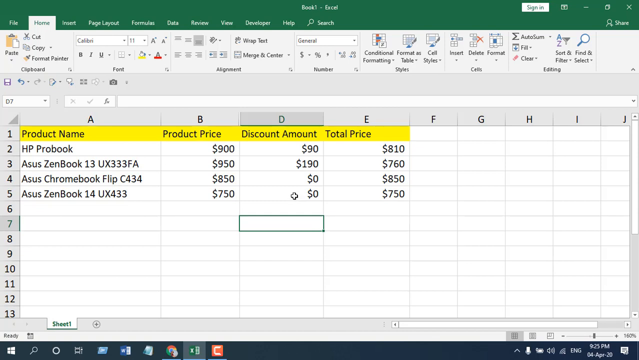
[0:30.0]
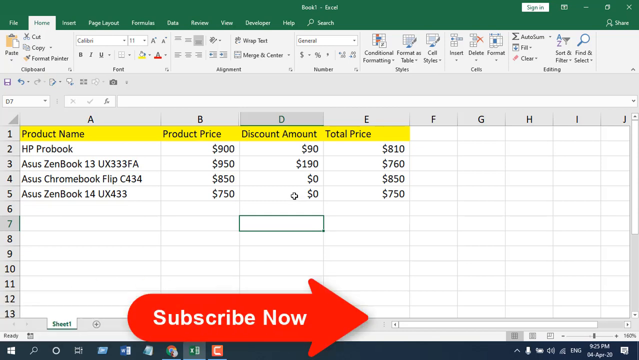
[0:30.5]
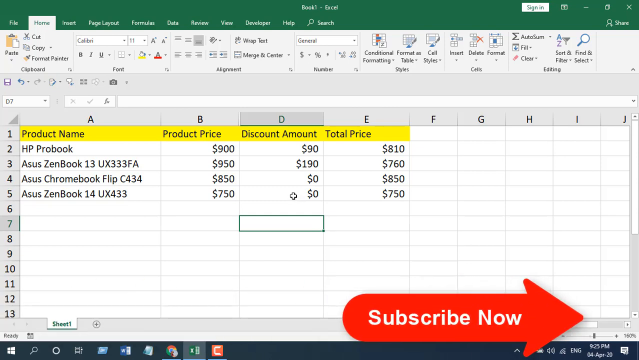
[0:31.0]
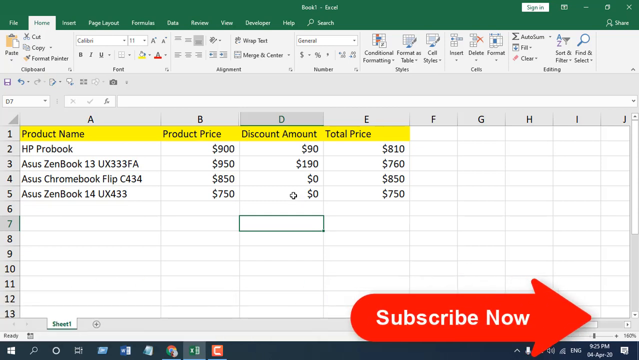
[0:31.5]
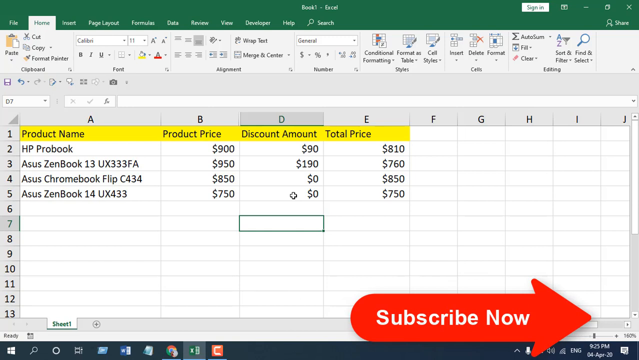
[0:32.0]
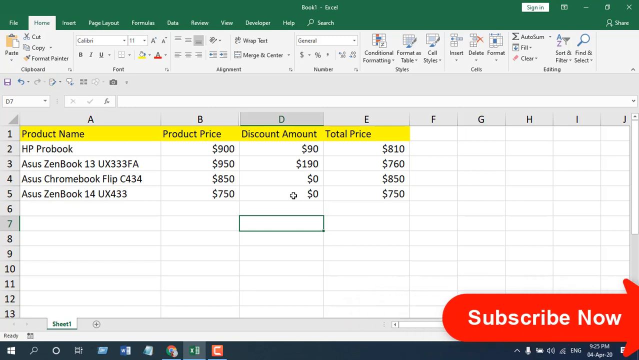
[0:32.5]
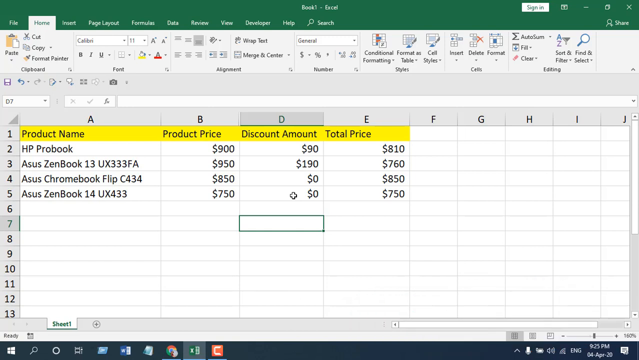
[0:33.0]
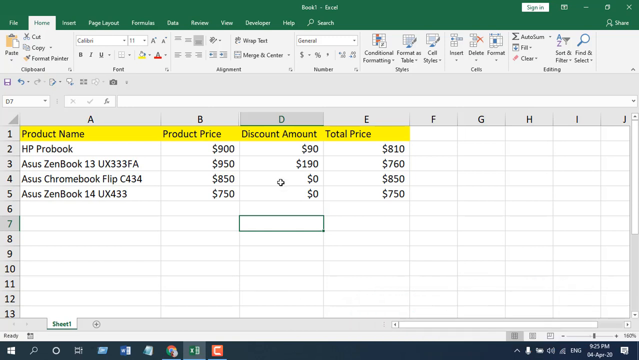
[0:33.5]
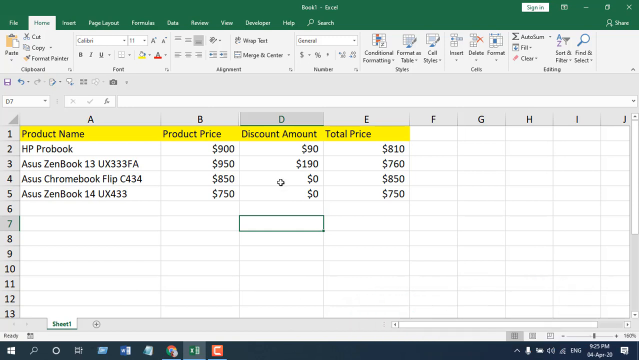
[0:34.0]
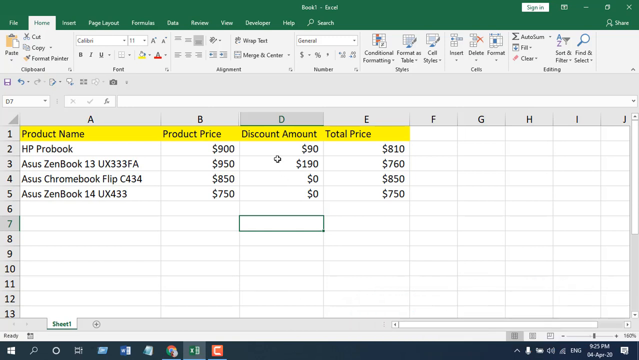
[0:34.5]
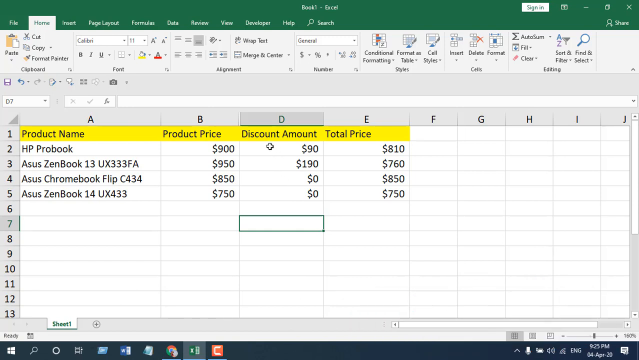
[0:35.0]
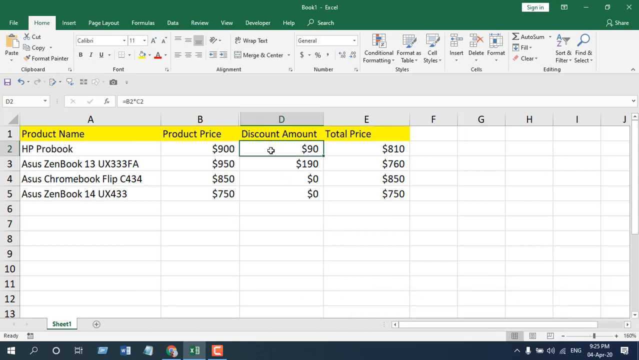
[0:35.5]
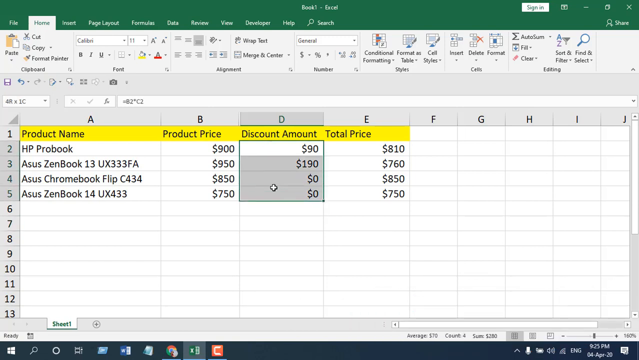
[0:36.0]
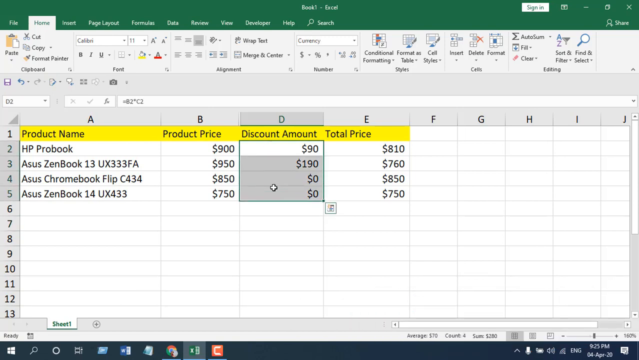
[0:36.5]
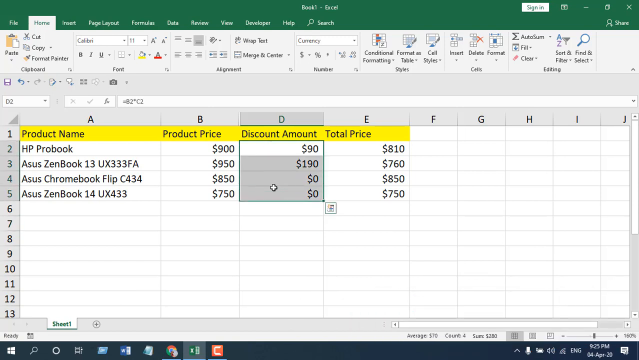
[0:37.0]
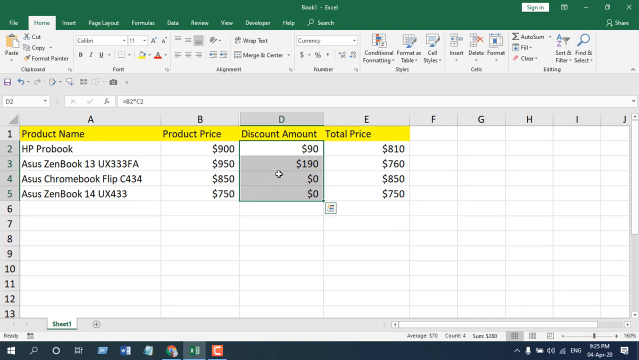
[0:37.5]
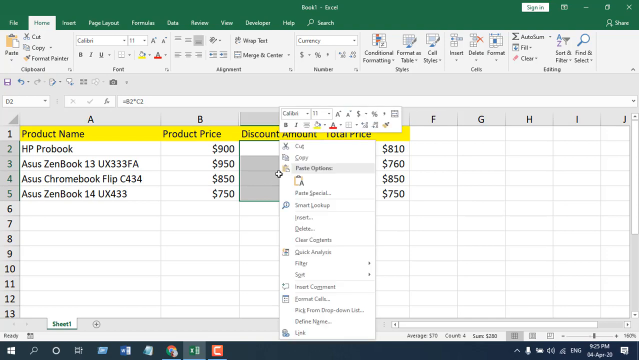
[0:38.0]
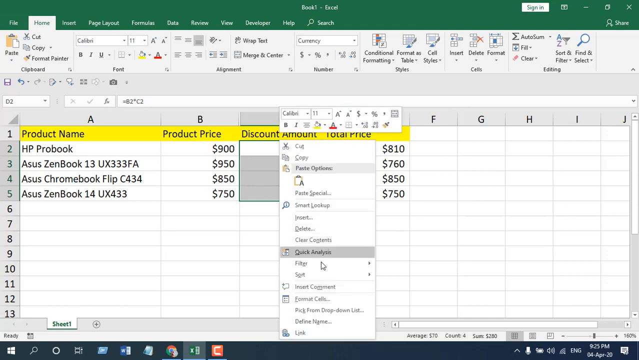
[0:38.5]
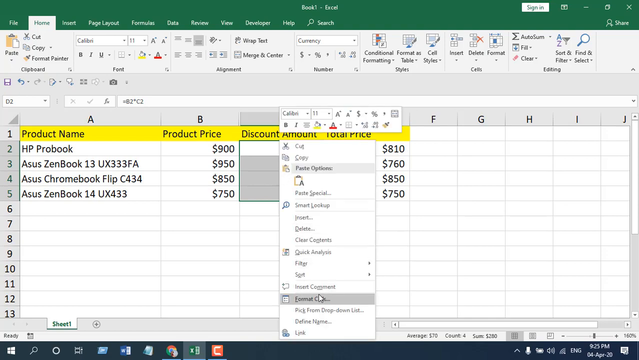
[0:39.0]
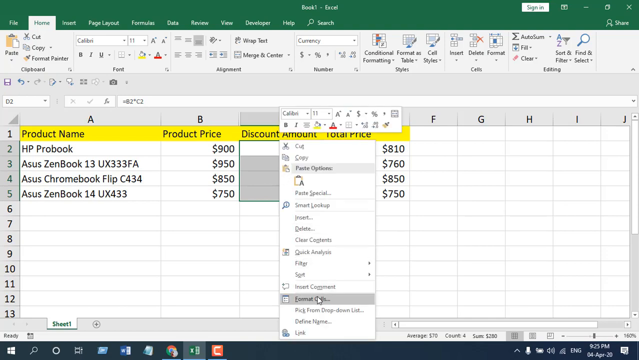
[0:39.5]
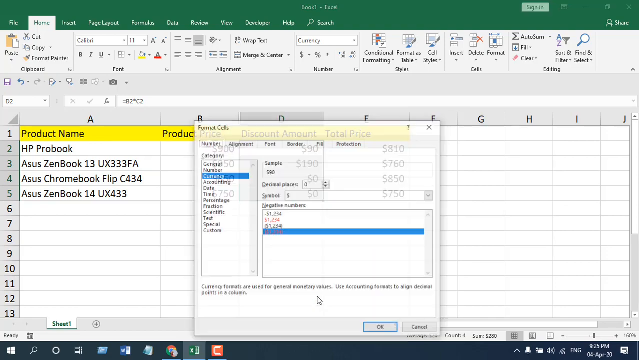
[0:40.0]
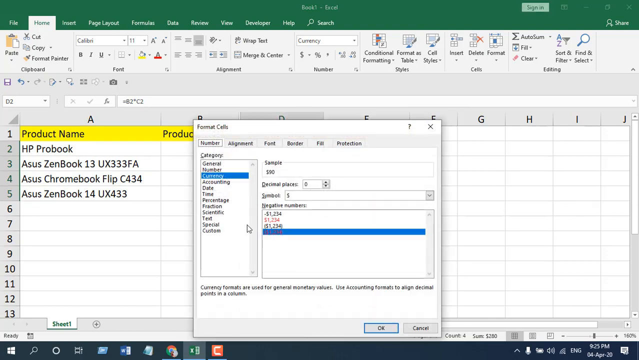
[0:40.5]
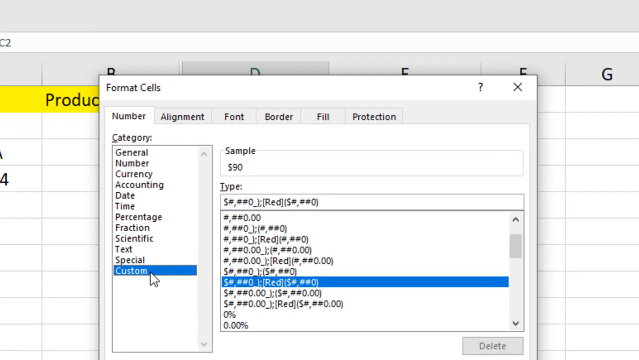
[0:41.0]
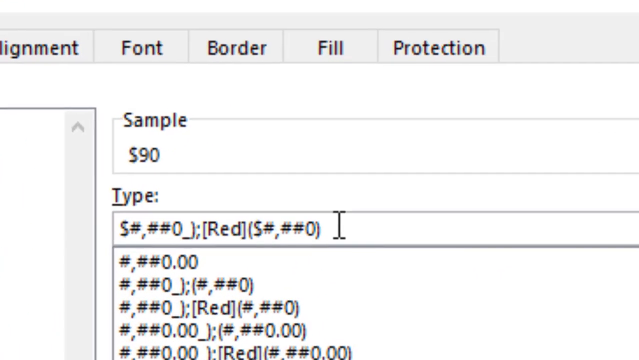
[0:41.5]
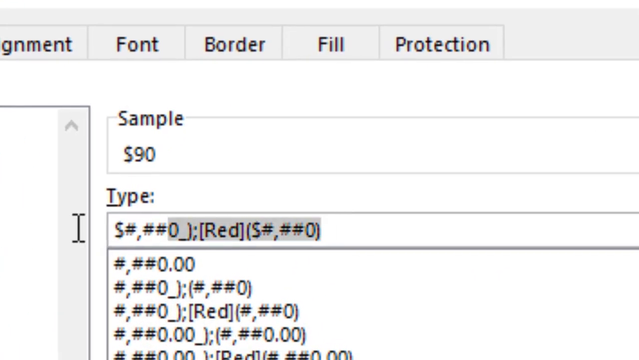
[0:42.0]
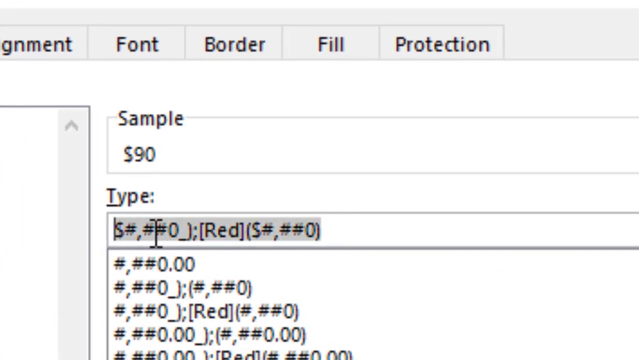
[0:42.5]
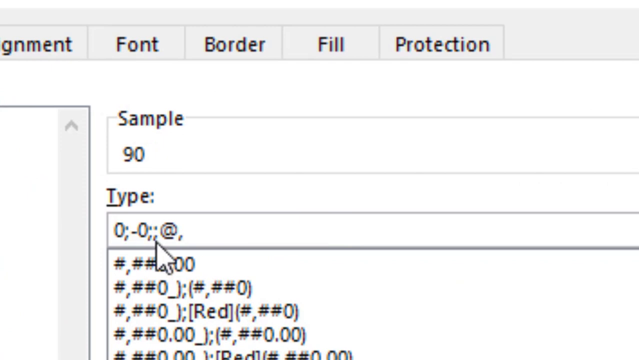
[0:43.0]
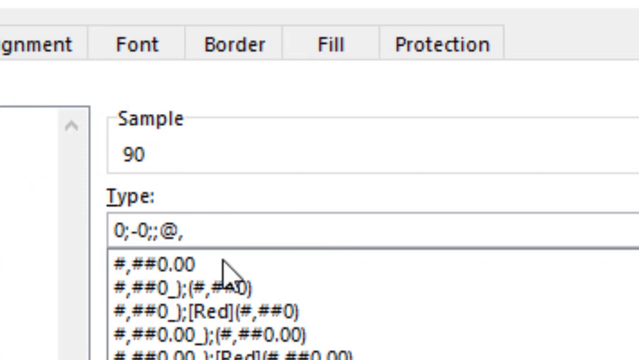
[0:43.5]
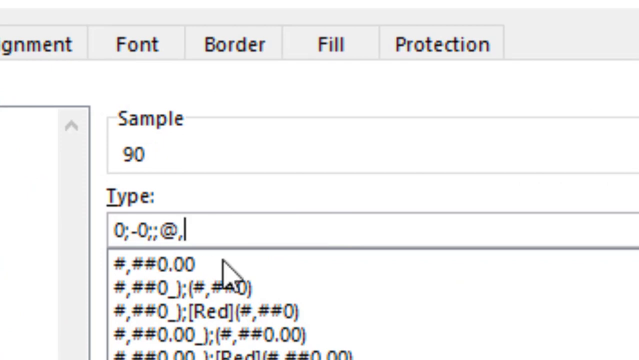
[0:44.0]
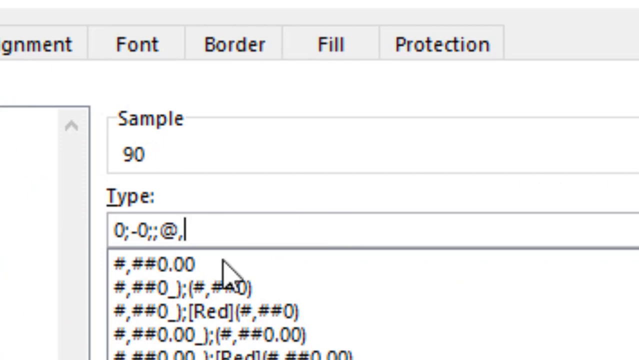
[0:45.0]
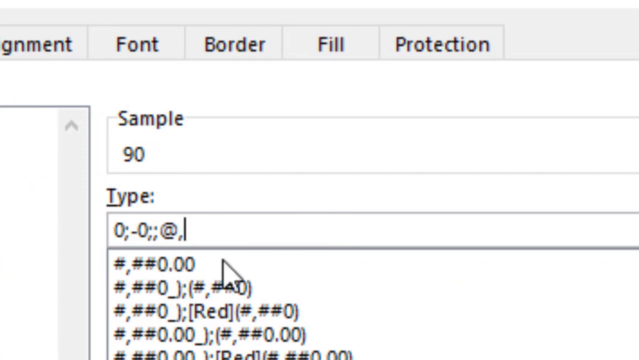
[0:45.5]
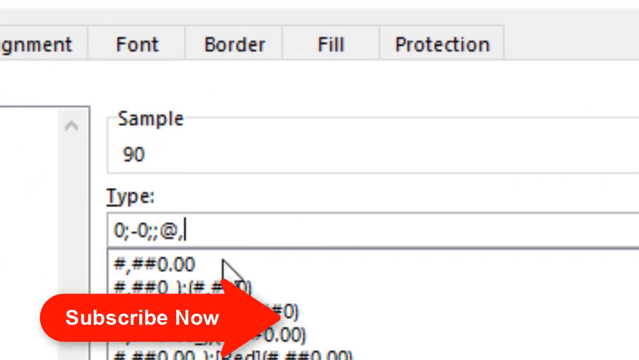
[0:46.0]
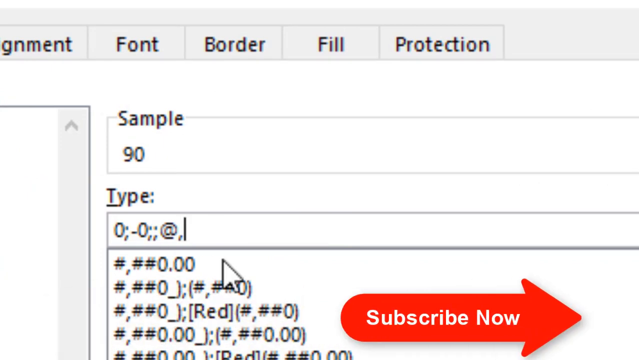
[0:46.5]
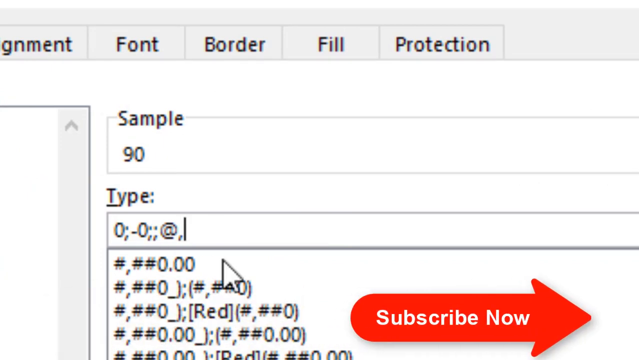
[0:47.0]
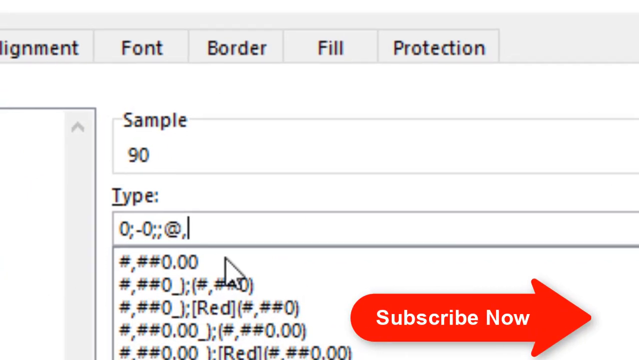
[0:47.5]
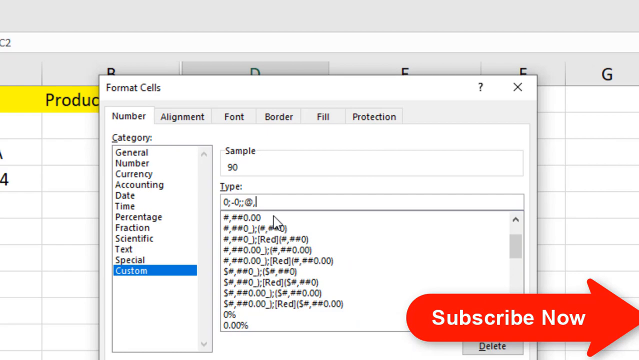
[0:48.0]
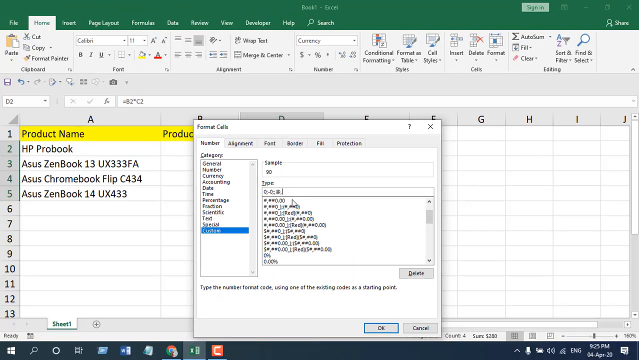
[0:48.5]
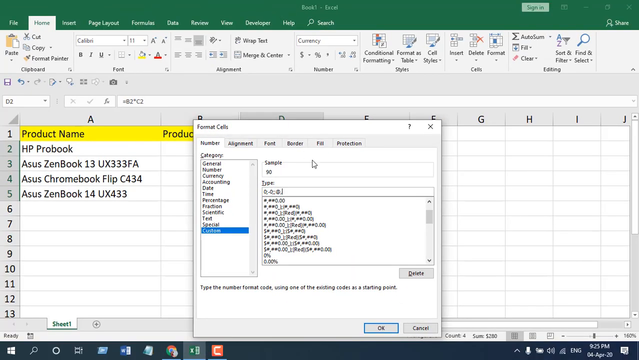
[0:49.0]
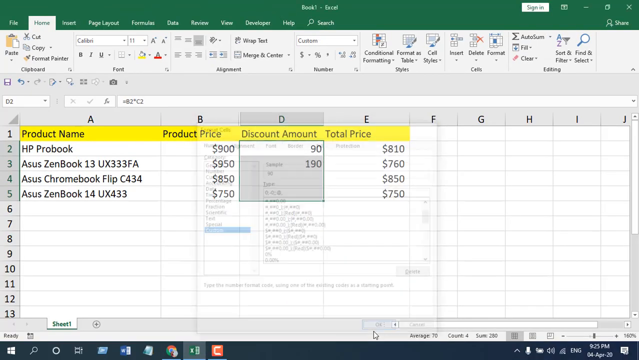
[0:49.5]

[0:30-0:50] Microsoft Excel is open to a spreadsheet of product names with their product prices, discount amounts and final total prices after the discount. The HP ProBook has a product price of $900, a discount amount of $90 and a total price of $810. The Asus ZenBook 13 UX333FA is priced at $950 with a $190 discount, for a total of $760. The Asus Chromebook Flip C434 is priced at $850 with a $0 discount and a total price of $850. The Asus ZenBook 14 UX433 has a product price of $750, a discount amount of $0 and a total price of $750. At the bottom of the screen is a red arrow with the words "subscribe now" written on it. The user moves the mouse cursor to the Discount Amount column and highlights the entire column. They right-click on it and select Format Cells, go to where it says "Type," open the drop-down menu and change its typing.